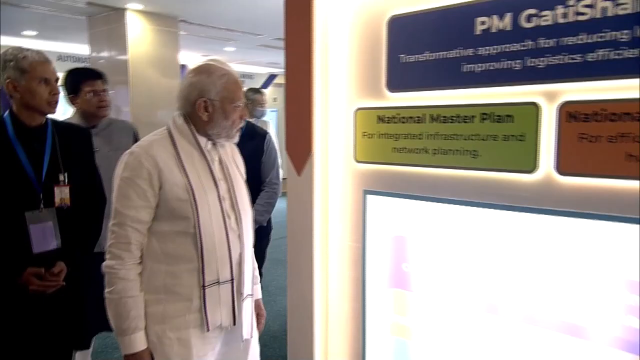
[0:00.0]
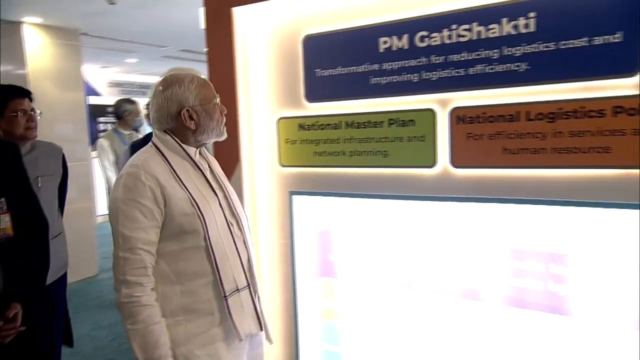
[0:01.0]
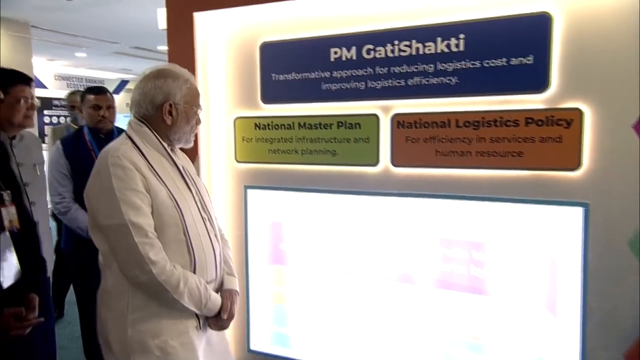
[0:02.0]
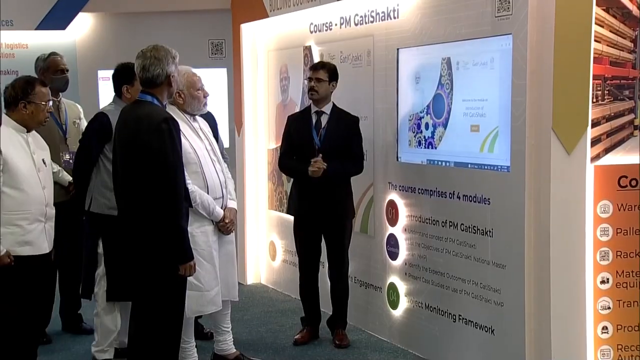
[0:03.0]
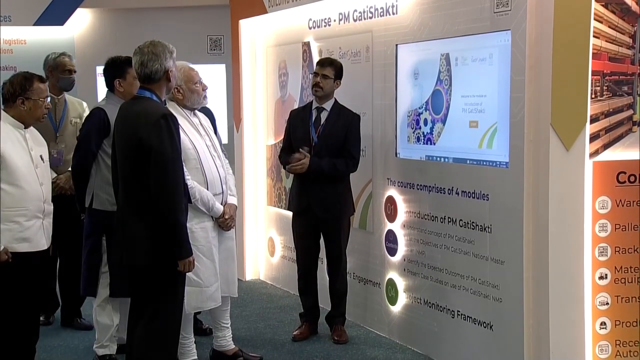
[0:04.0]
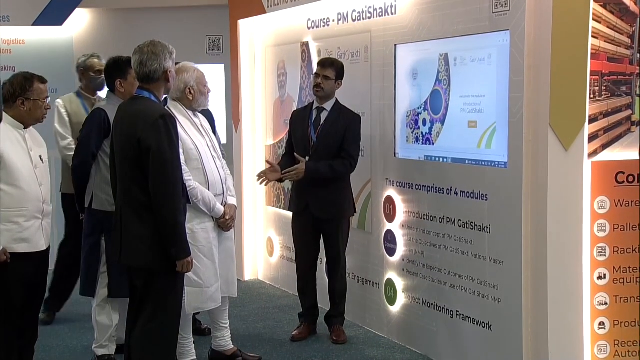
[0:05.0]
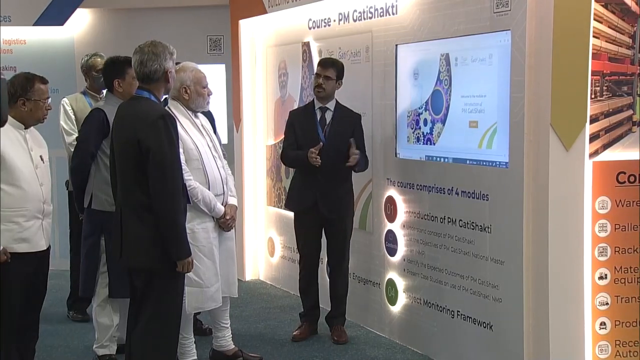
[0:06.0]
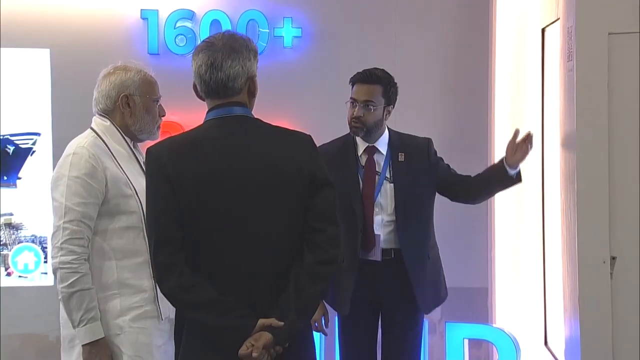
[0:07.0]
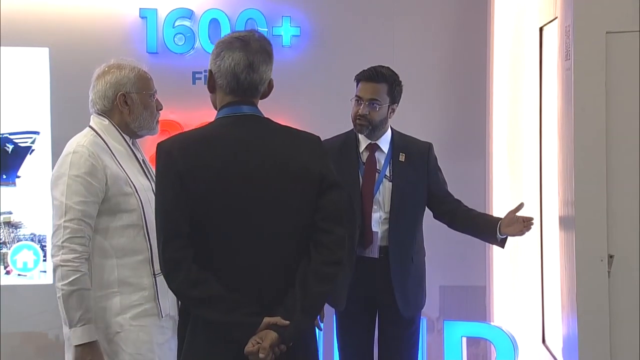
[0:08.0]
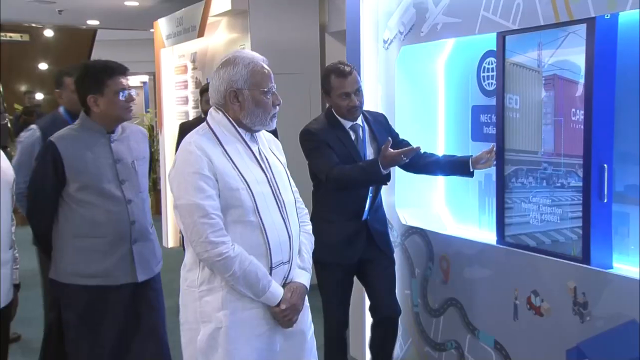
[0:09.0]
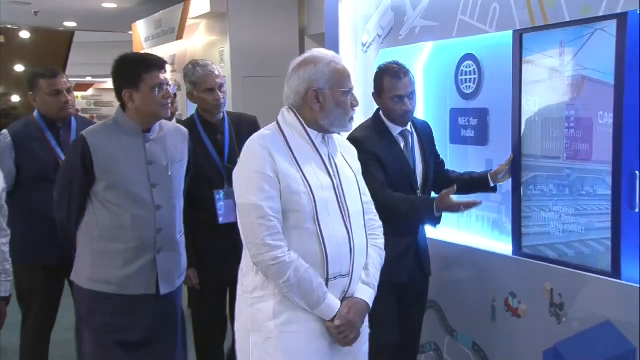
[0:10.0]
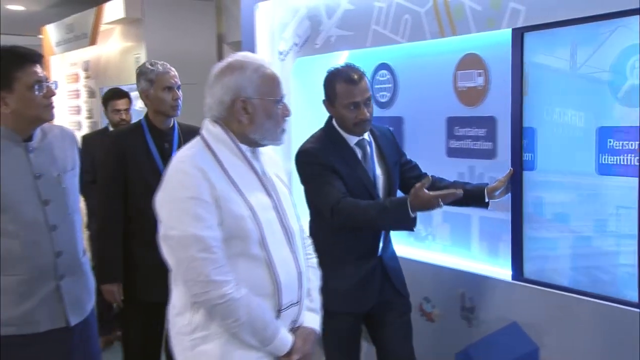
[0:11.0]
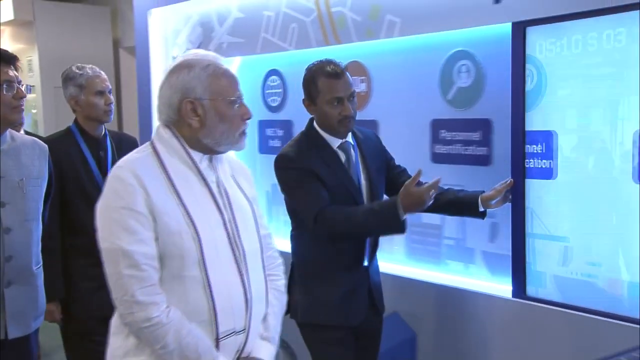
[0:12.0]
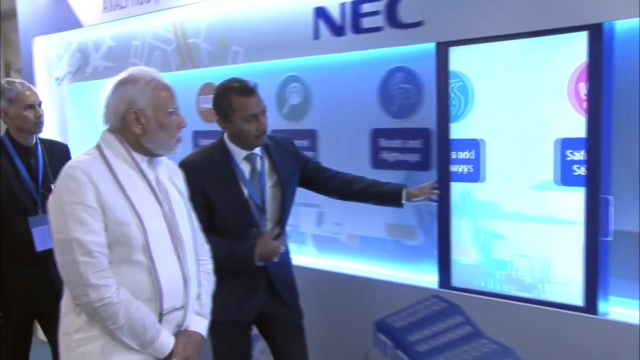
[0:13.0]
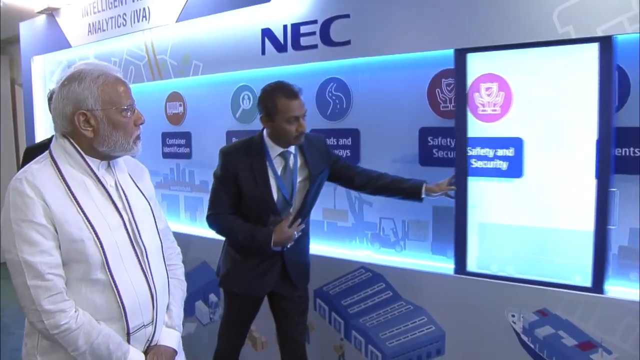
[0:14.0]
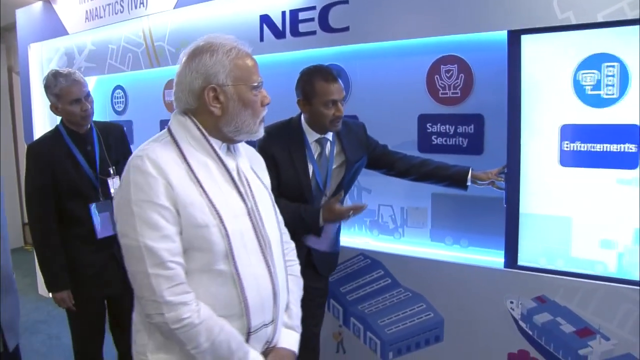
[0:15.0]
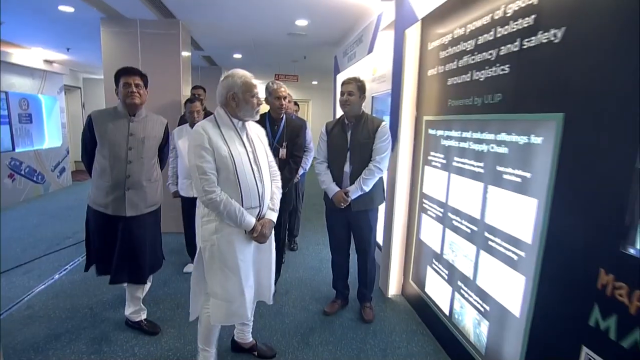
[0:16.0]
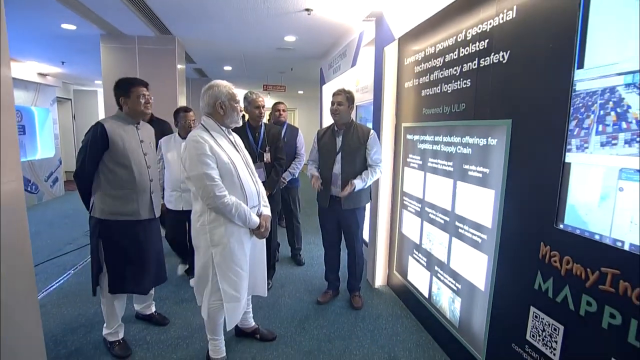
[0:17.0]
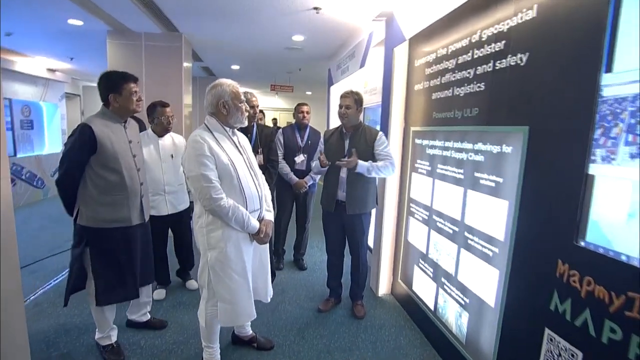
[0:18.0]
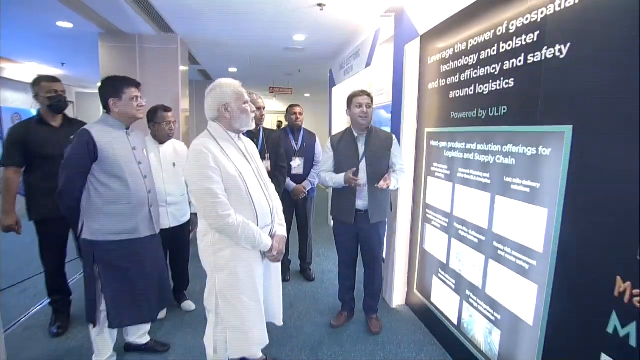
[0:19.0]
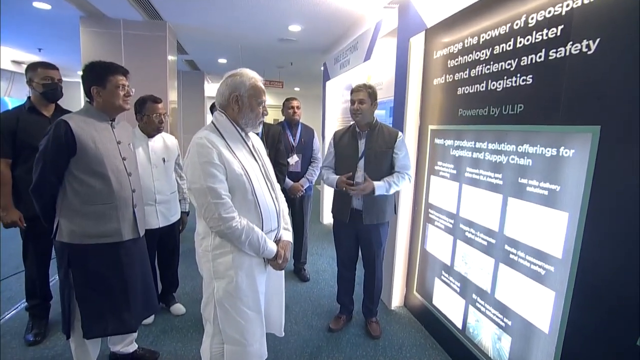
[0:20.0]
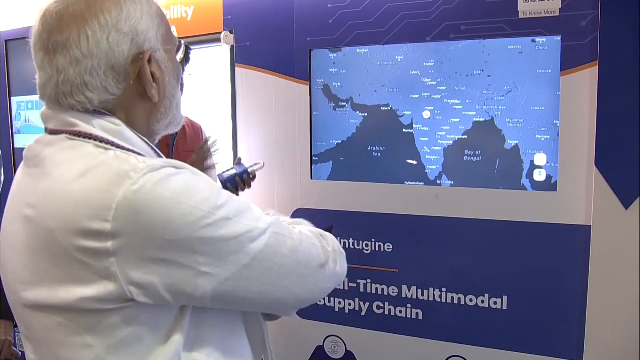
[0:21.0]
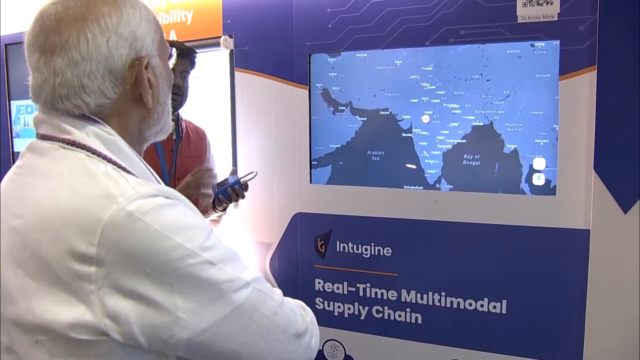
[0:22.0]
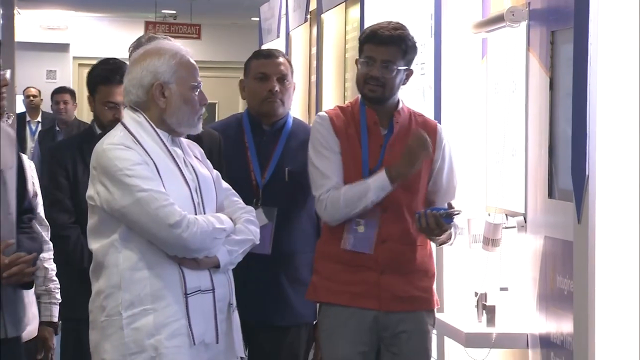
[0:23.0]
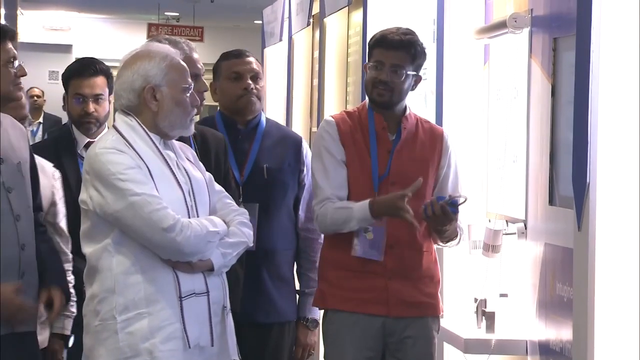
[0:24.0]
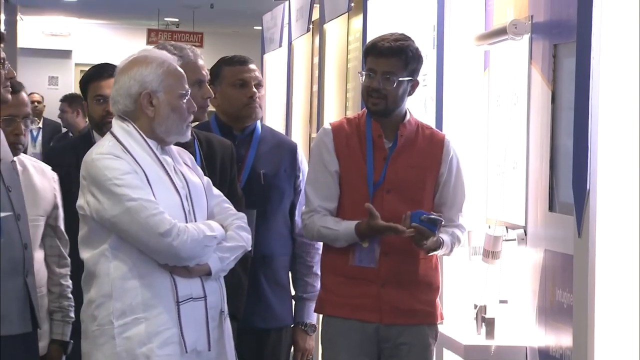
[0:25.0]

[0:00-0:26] Prime Minister Modi of India appears to be taking a tour of what looks like a museum. A group of people, apparently his entourage, surrounds him, all wearing blue lanyards. He is dressed in white, in what seems like traditional Indian clothing, and it is very formal. He has glasses, white hair and a white beard. There are many flashes from the media watching him. Some people explain each of the exhibitions, each spot he goes to; someone explains to him what a diagram is for, and they also wear the lanyards. Some people are wearing masks. The setting looks like a convention center or a museum, with screens showing facts about technology, security and transportation.